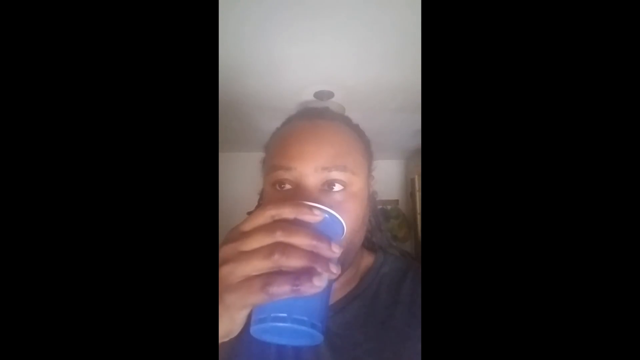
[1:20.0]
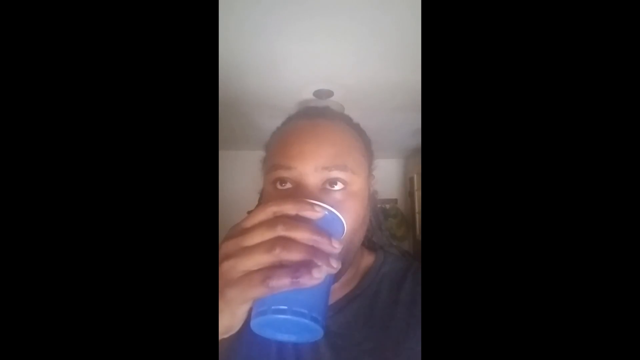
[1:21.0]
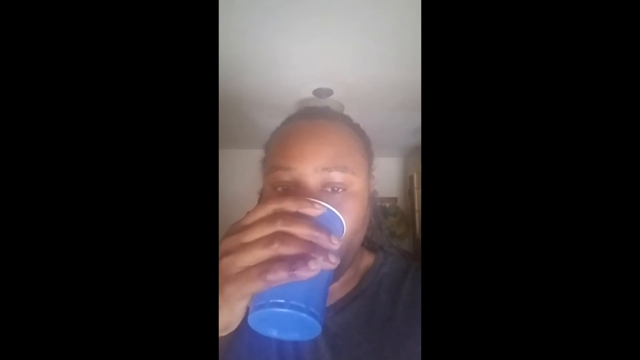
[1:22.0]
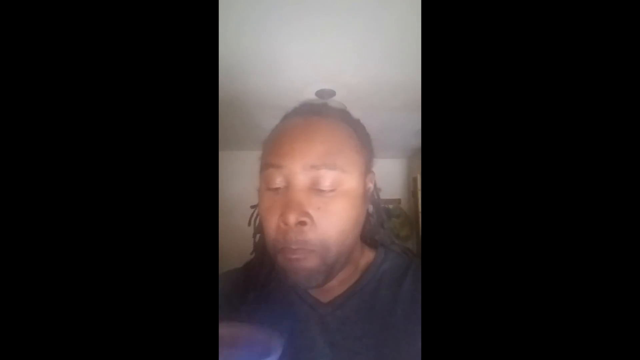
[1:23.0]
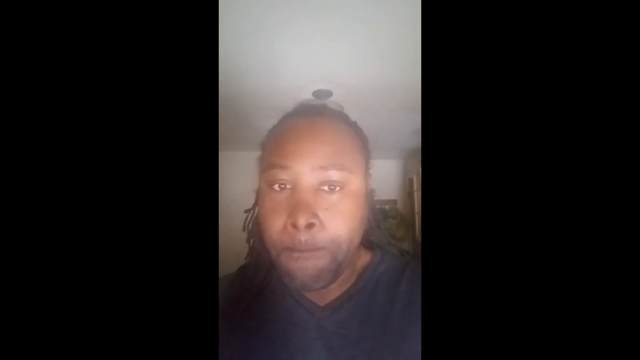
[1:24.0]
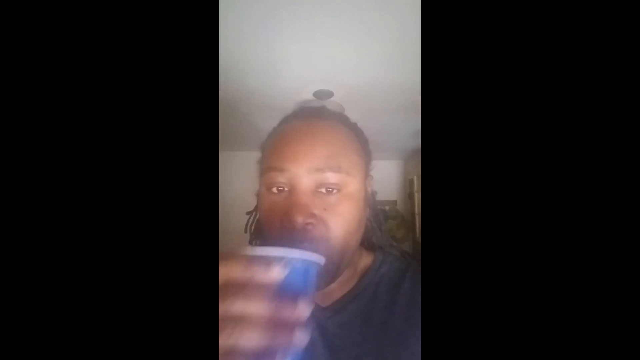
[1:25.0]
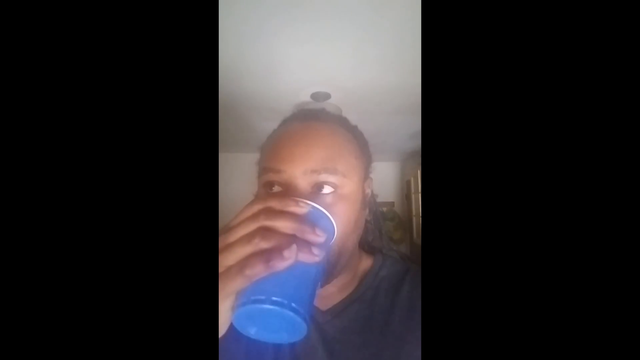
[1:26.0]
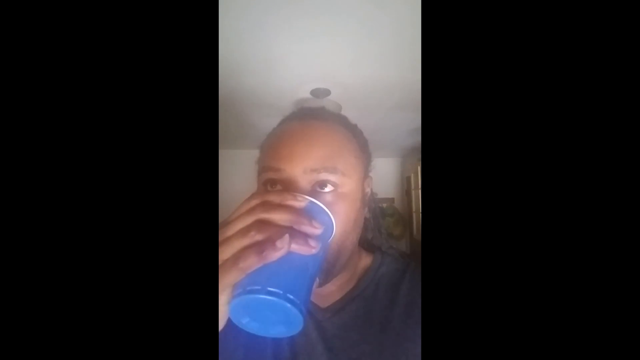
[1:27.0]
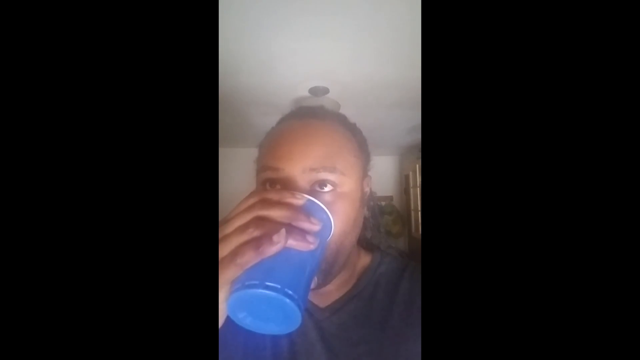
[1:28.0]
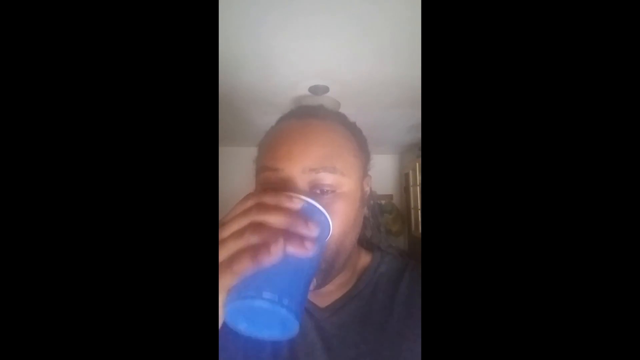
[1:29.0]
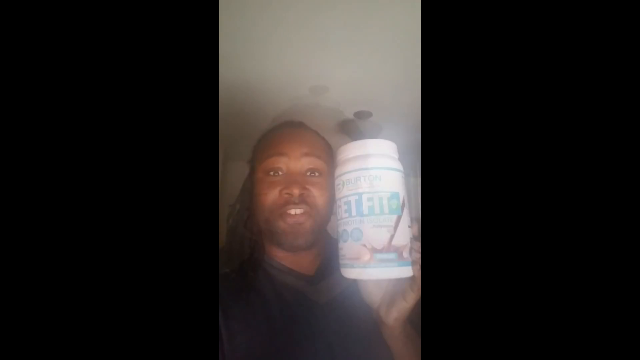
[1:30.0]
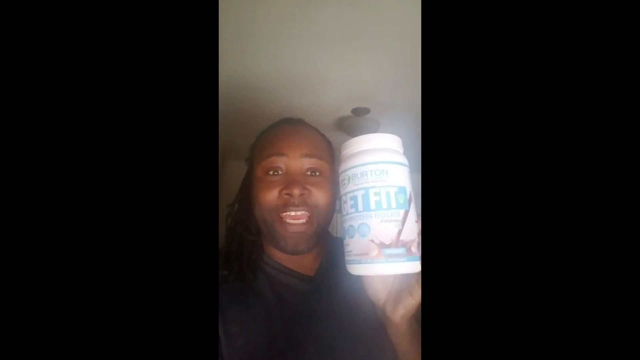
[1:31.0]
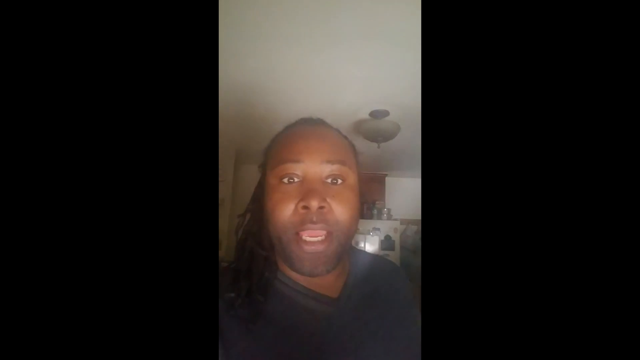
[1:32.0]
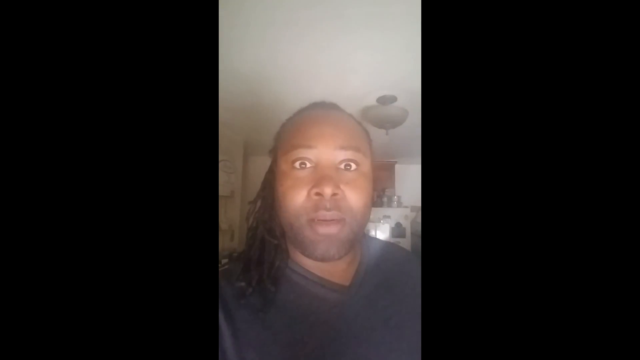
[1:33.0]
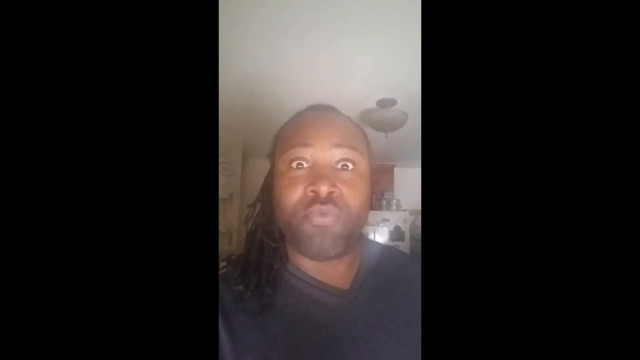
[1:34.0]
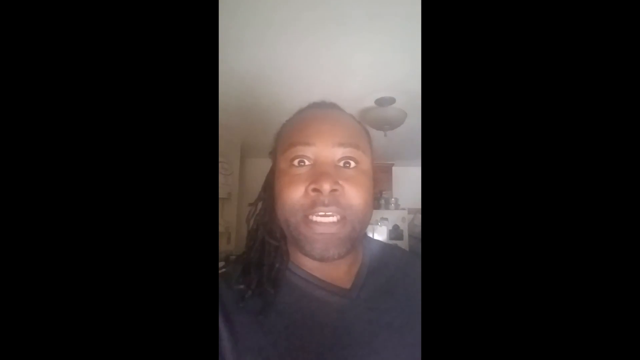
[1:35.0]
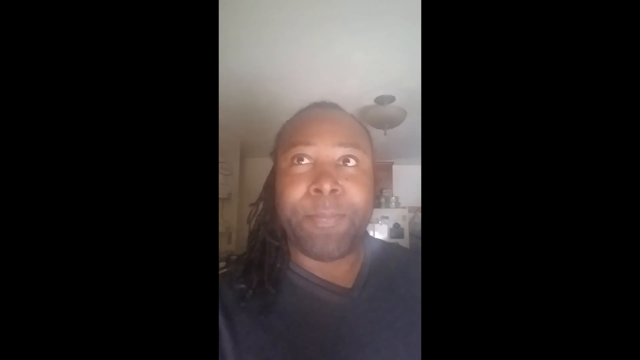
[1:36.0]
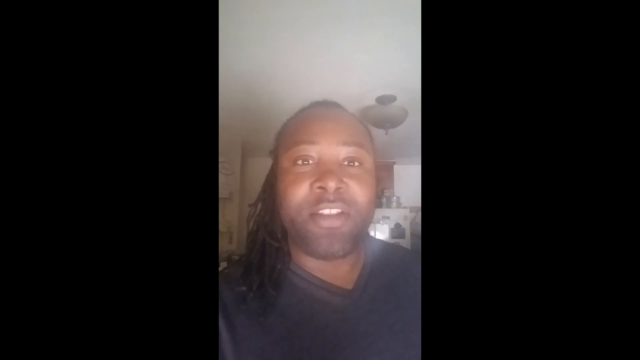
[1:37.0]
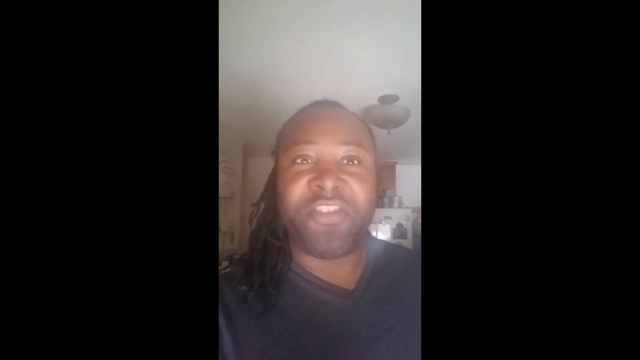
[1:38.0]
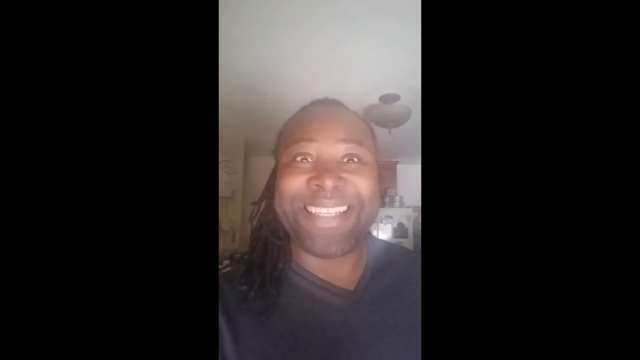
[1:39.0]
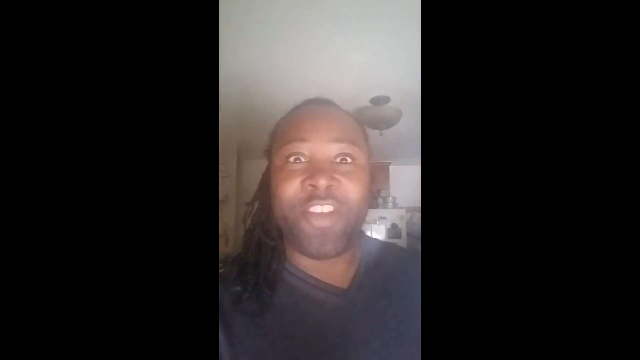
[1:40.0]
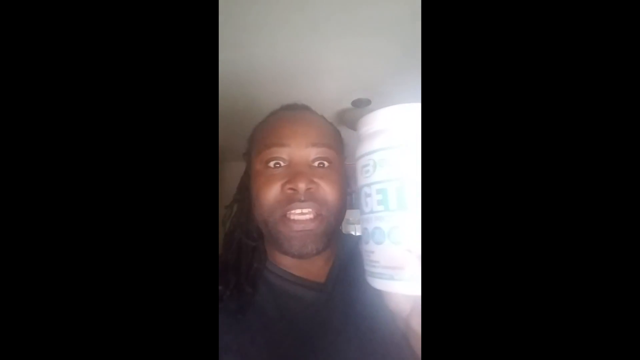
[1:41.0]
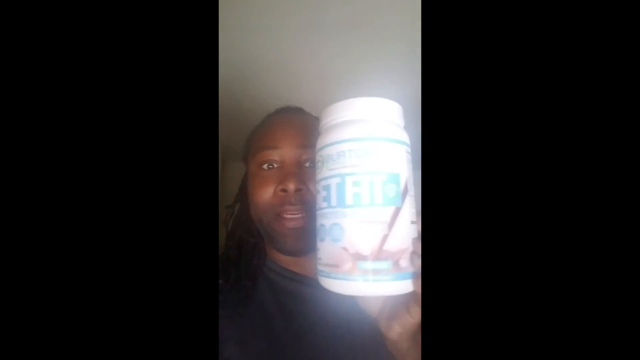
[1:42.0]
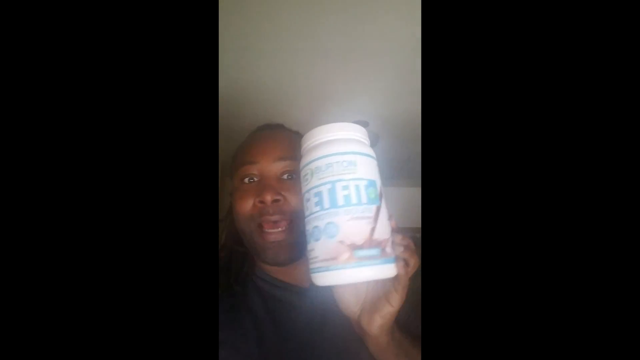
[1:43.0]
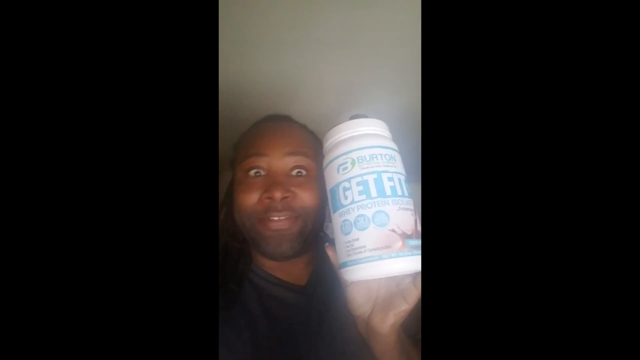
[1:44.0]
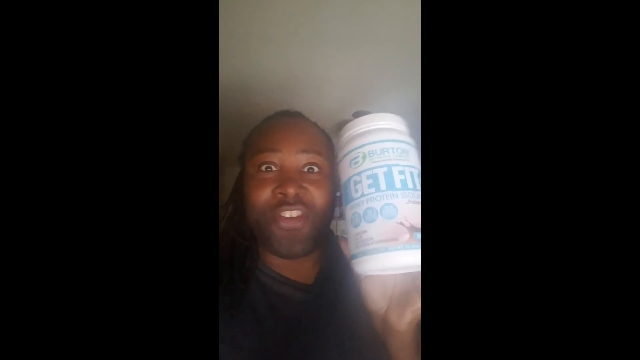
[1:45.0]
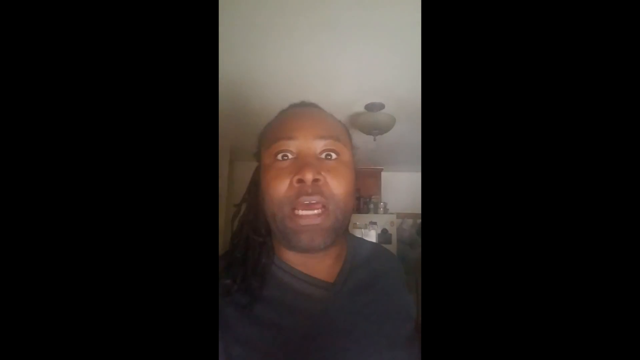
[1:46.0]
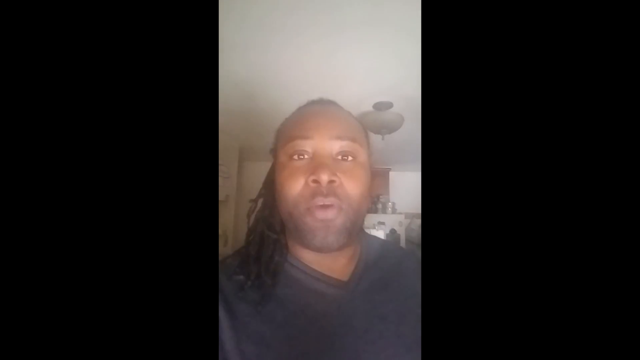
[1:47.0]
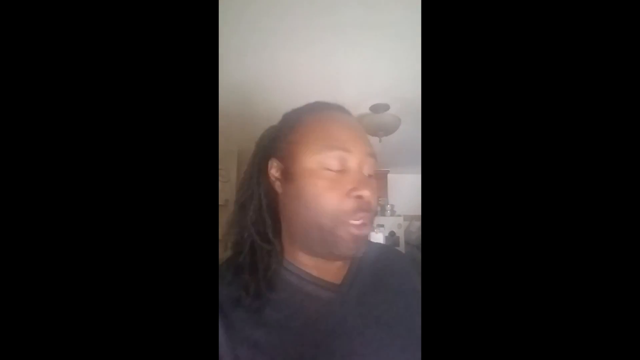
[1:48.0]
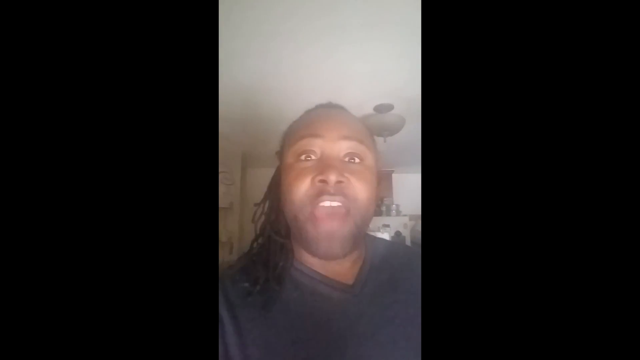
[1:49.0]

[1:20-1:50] The man has lifted the blue Solo cup to his mouth and drinks from it. He sets it down, licks his lips, and looks toward the camera. He picks it back up, drinks from it, and puts it down. Next, the man holds up the product, a big canister that is larger than his head. More of his surroundings are visible because he has moved the camera off to the side: the light fixture coming from his white ceiling, and what looks like the top of his refrigerator behind his right shoulder. He continues talking to the camera, then shows the container of GetFit to the viewers, turning it around.